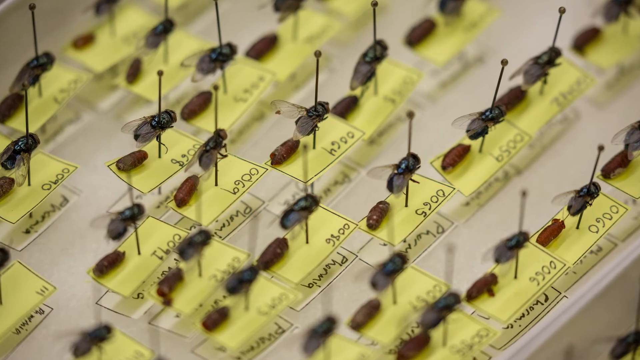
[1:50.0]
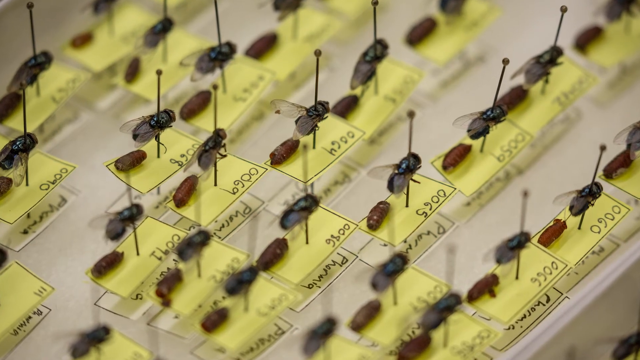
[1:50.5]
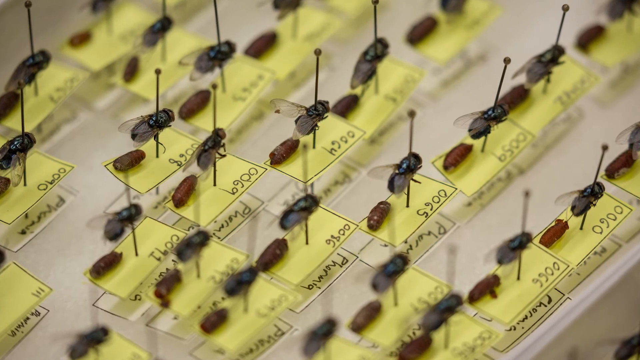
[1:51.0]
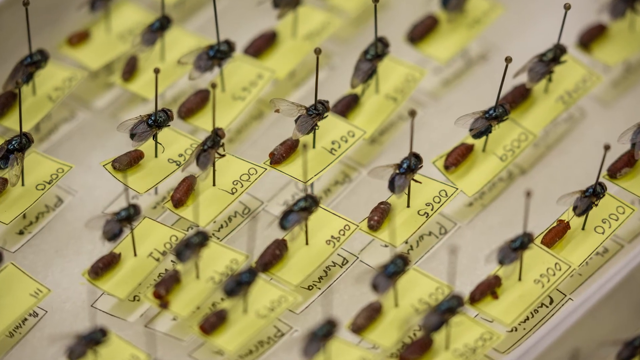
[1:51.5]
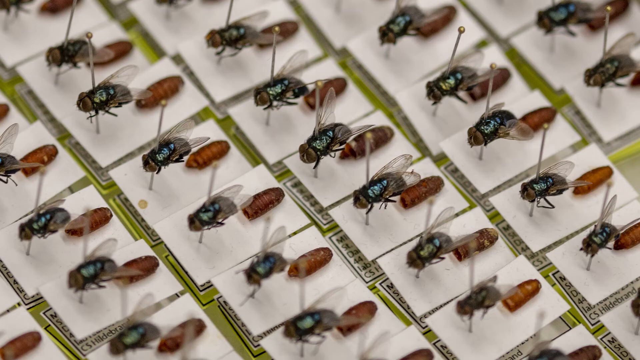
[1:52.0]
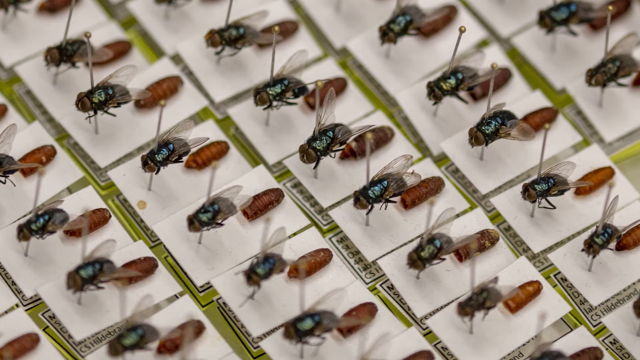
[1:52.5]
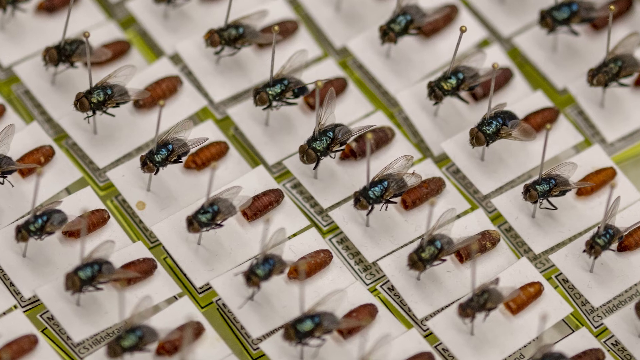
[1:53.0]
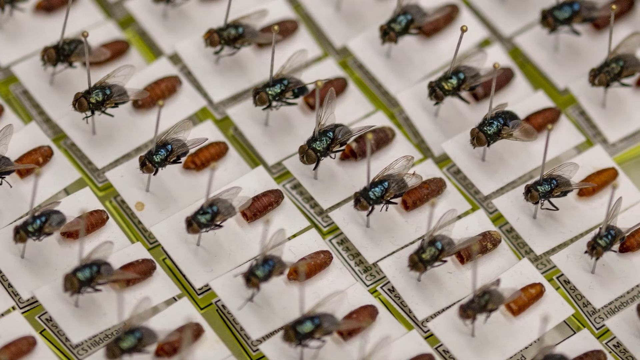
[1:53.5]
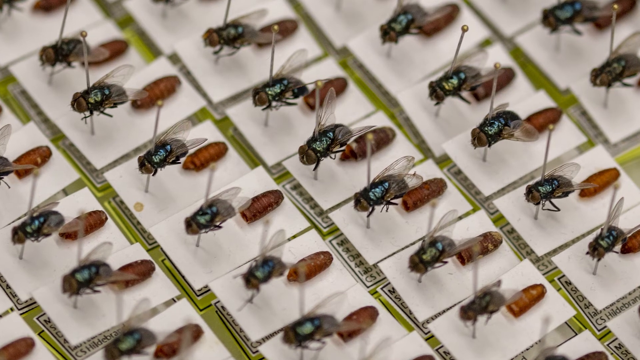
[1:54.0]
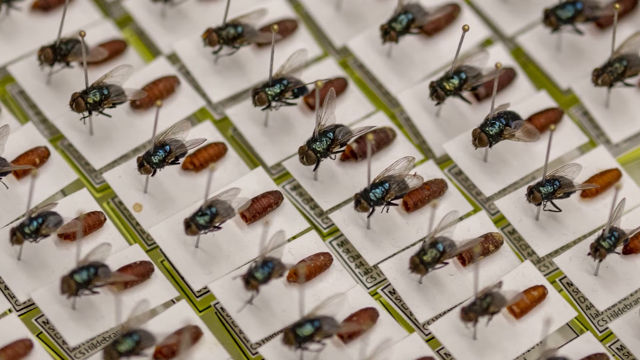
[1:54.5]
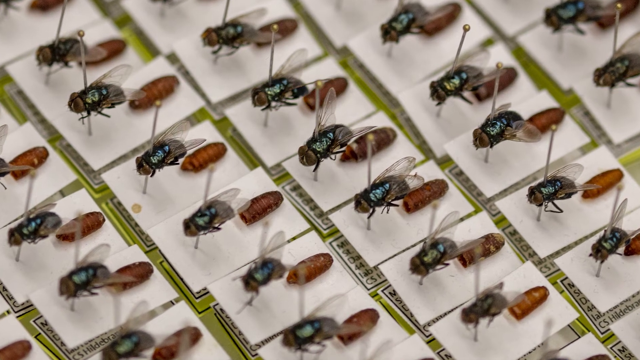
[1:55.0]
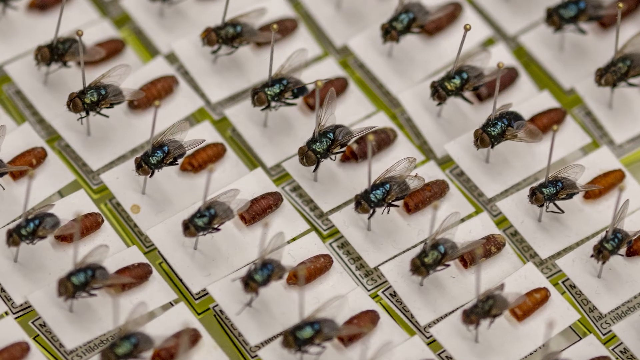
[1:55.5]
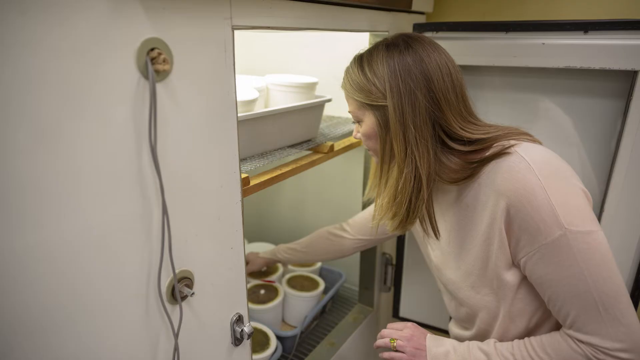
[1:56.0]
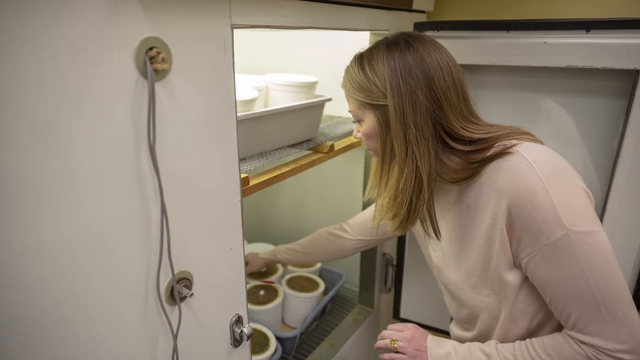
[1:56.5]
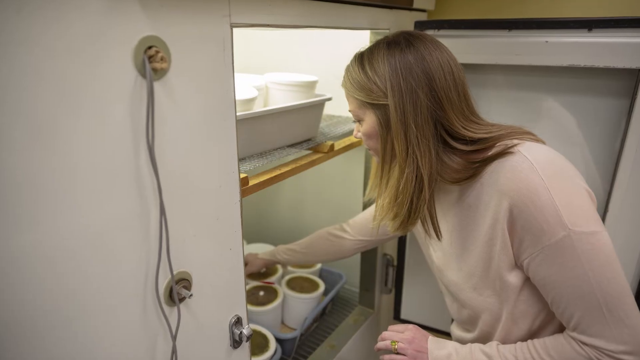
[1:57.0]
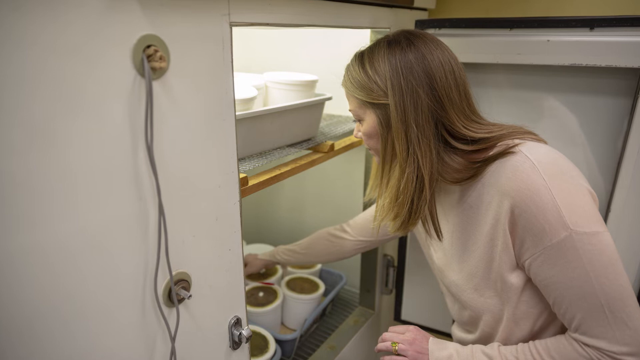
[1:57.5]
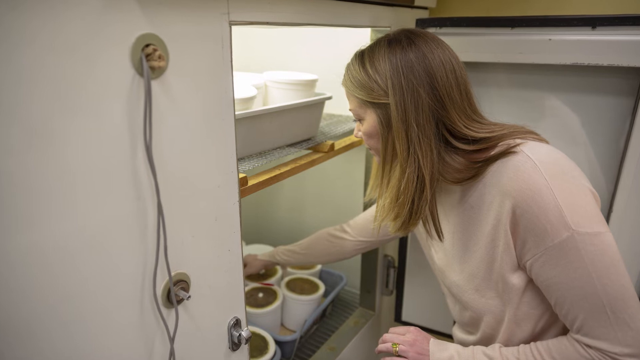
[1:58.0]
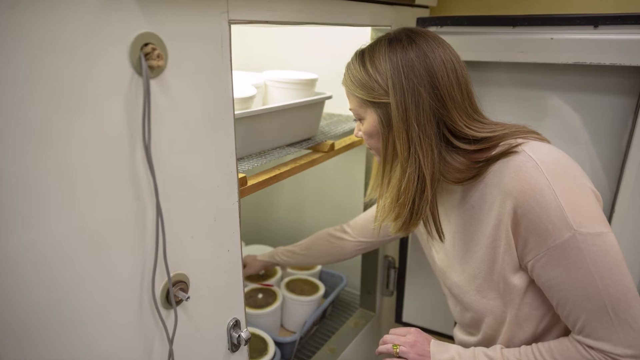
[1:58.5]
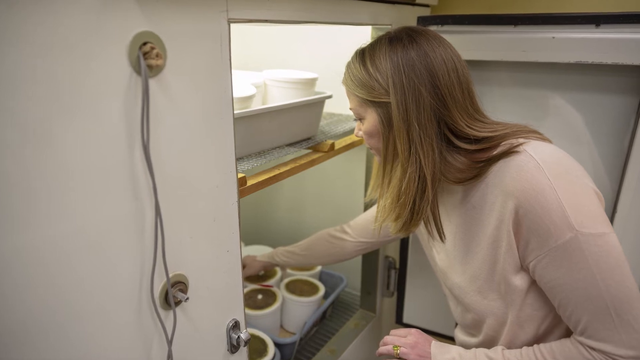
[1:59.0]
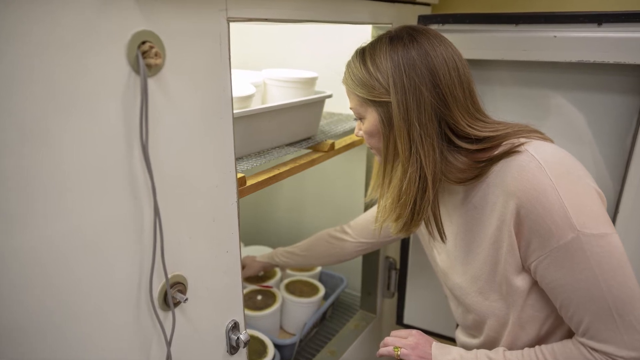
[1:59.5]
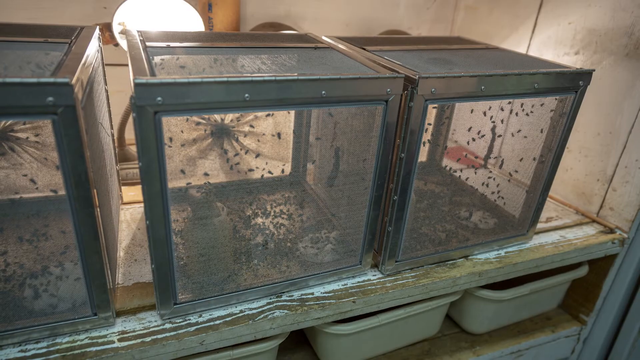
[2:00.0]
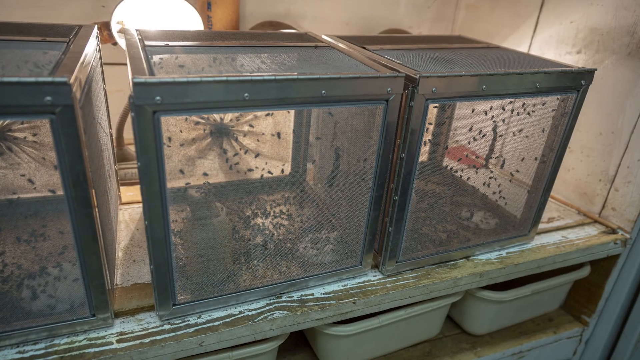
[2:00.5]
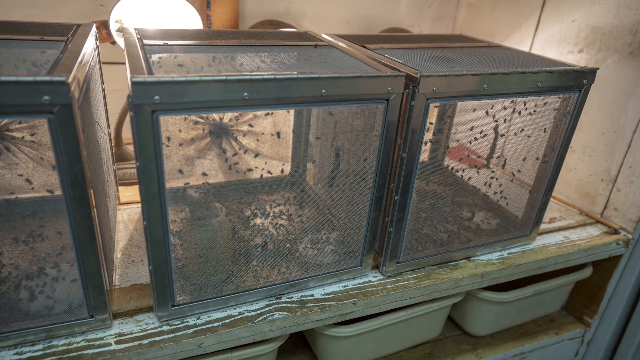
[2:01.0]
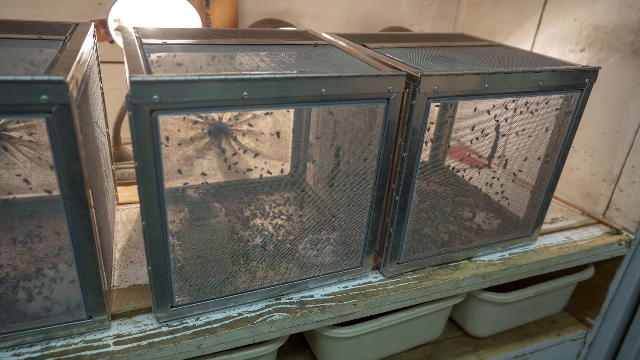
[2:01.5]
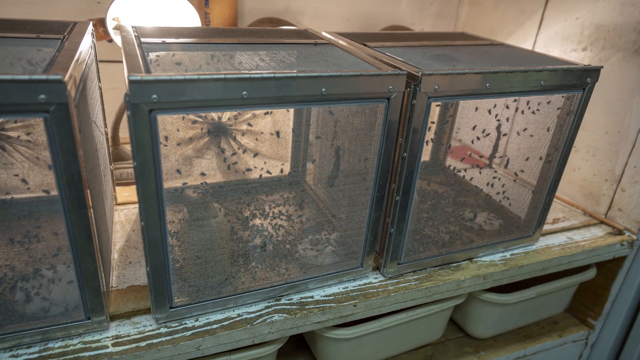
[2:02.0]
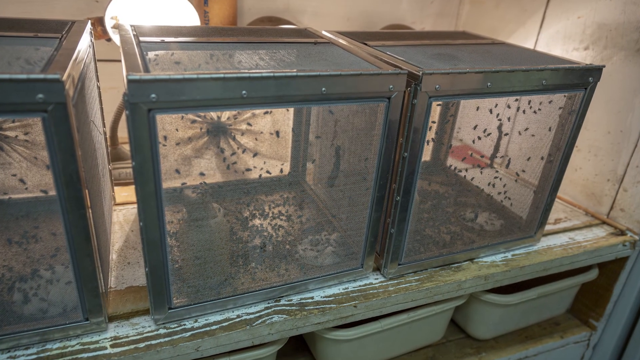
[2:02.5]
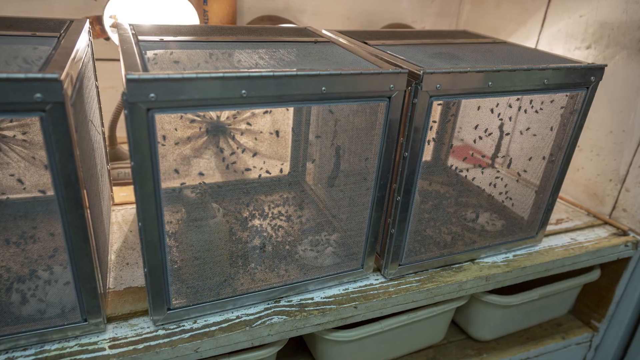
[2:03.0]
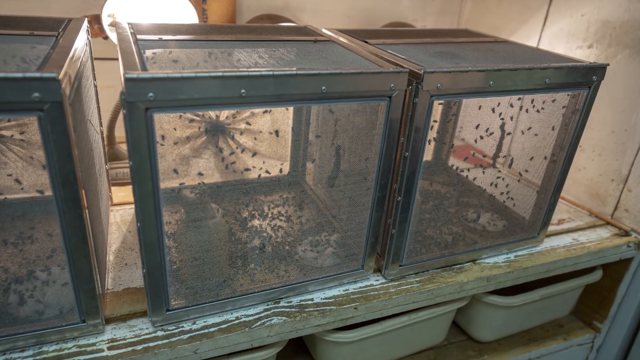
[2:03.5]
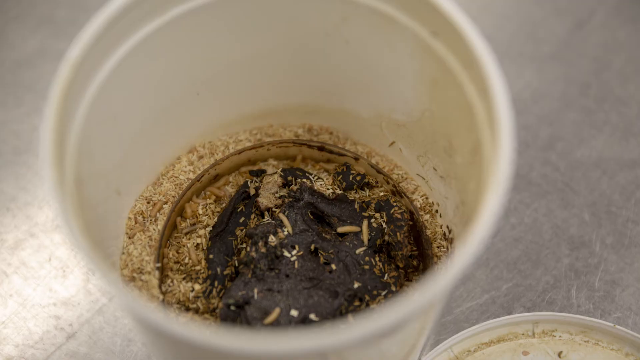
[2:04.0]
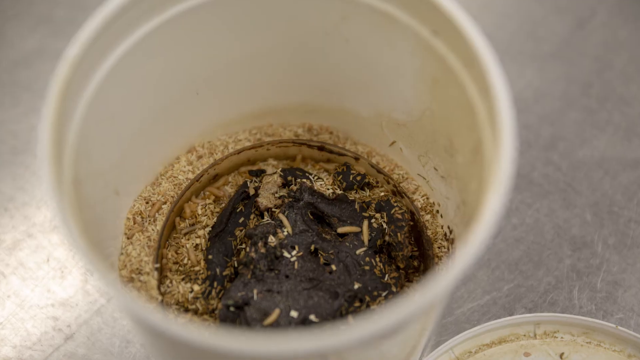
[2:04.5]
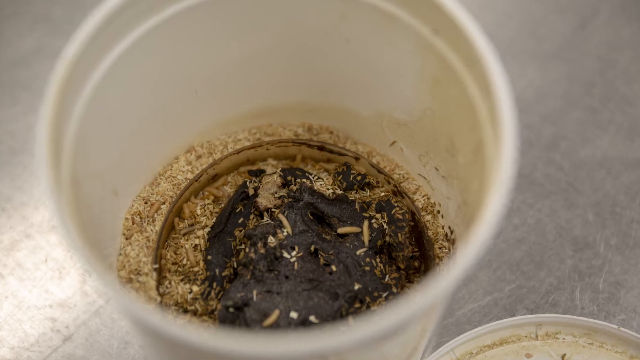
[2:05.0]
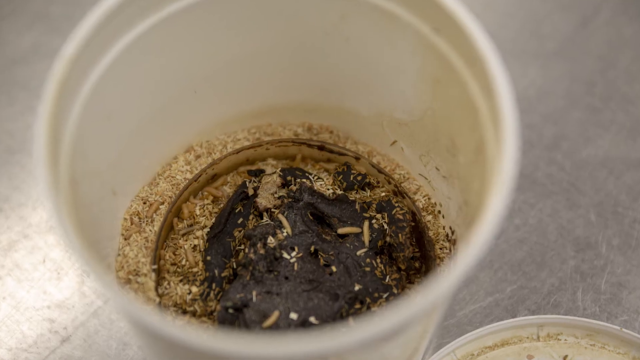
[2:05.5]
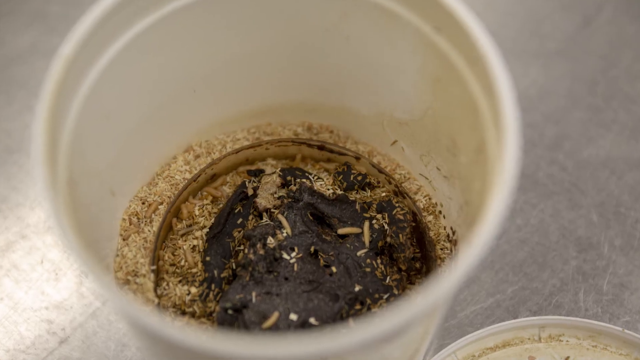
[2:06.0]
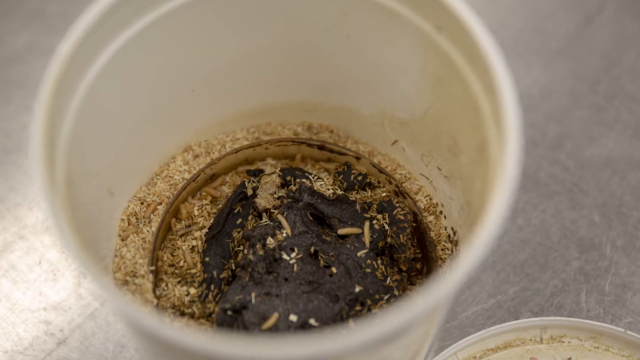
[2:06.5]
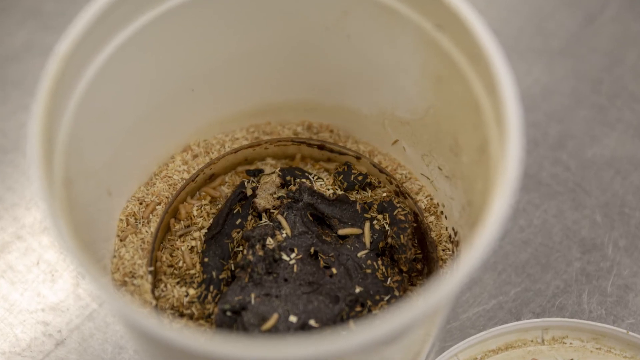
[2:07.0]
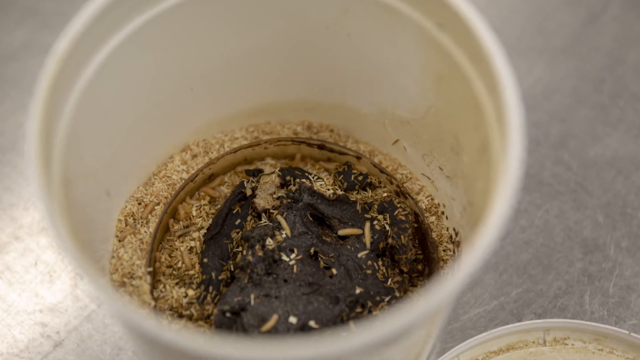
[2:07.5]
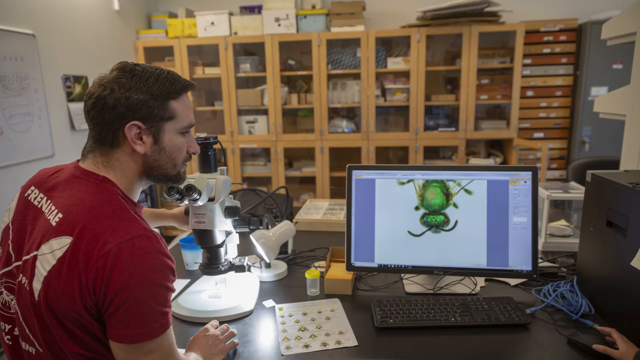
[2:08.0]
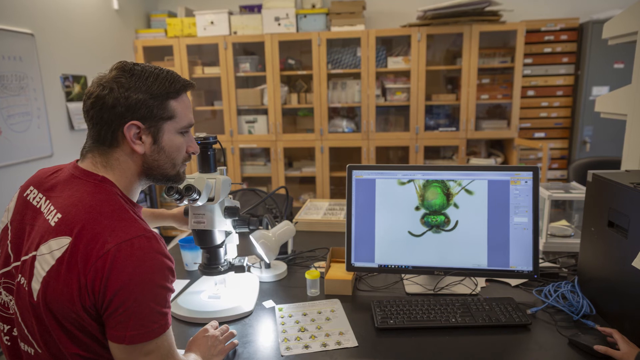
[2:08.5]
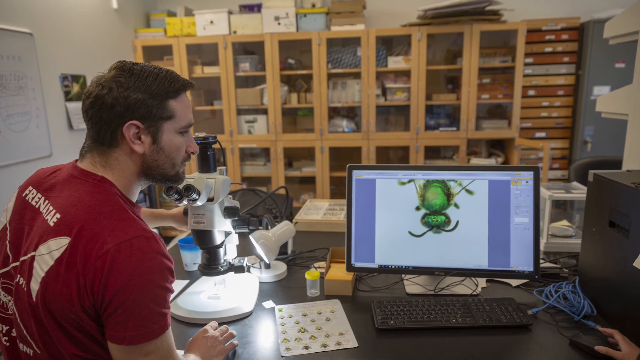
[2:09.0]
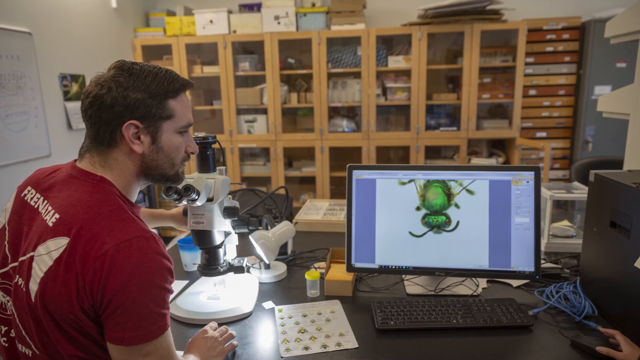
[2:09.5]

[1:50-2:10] A bunch of flies have little objects stuck through them, with little yellow numbered pieces of paper attached. What looks to be larvae are next to the flies. Another photograph shows the same flies and larvae. A photograph then shows a woman with short, straight blonde hair in what looks to be a fridge, with different containers in basins. Large, kind of screen boxes hold a bunch of either flies or bees inside, with a light behind them. A little white plastic container appears to have maggots inside. A man looks at a computer screen showing a bug up close, apparently a fly. In front of him is a device that lets him look at the fly closer, which looks like a microscope. Storage shelves holding a bunch of objects are in the distance, along with a whiteboard.